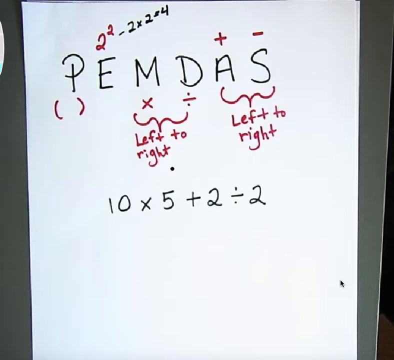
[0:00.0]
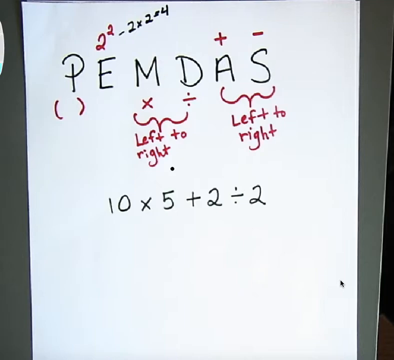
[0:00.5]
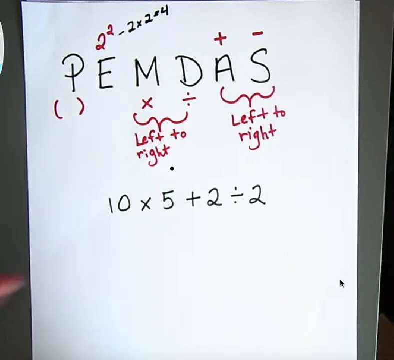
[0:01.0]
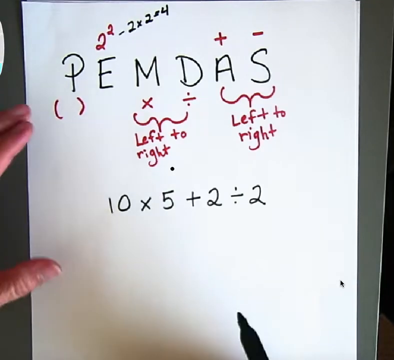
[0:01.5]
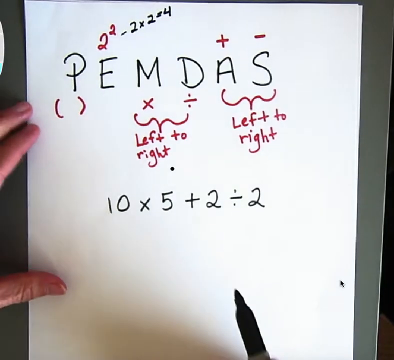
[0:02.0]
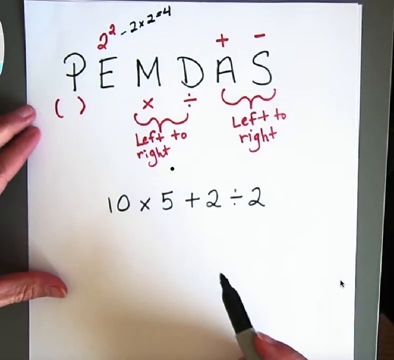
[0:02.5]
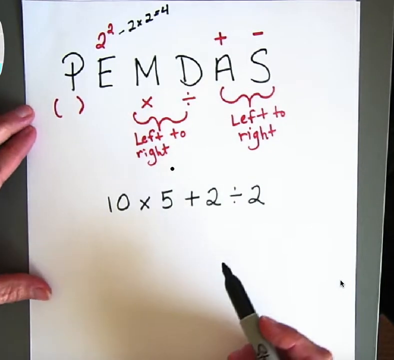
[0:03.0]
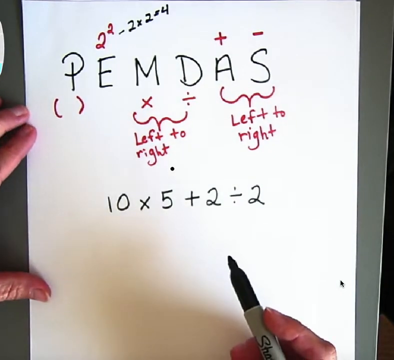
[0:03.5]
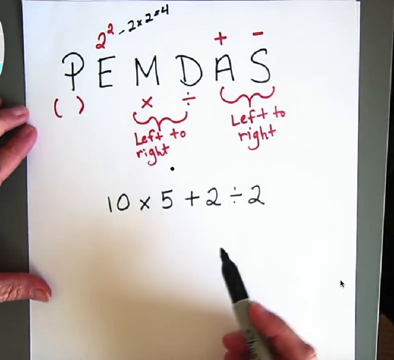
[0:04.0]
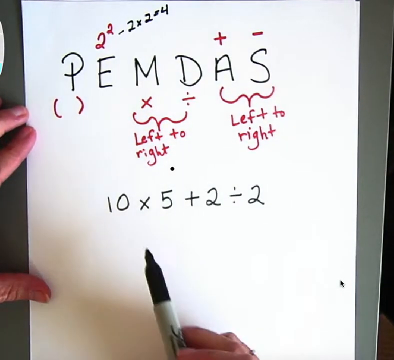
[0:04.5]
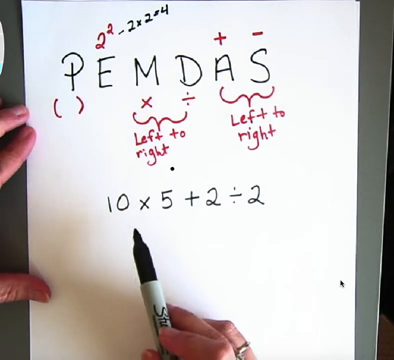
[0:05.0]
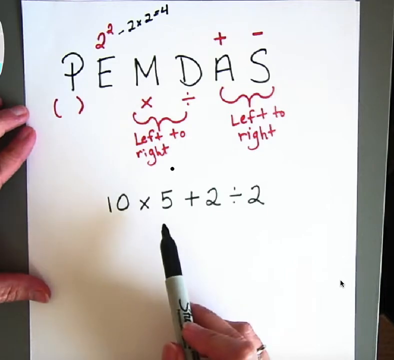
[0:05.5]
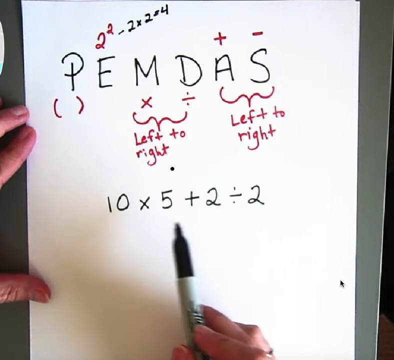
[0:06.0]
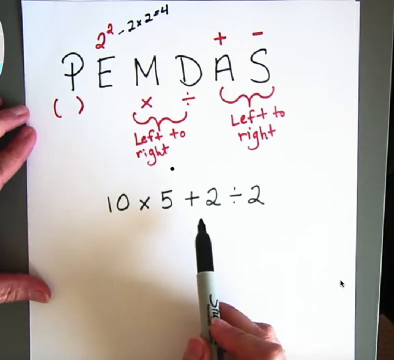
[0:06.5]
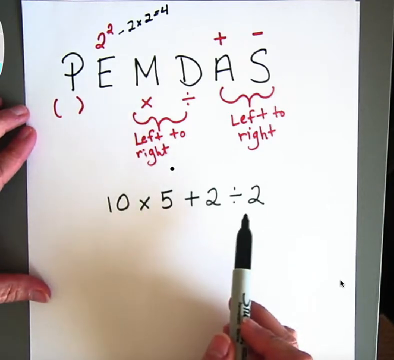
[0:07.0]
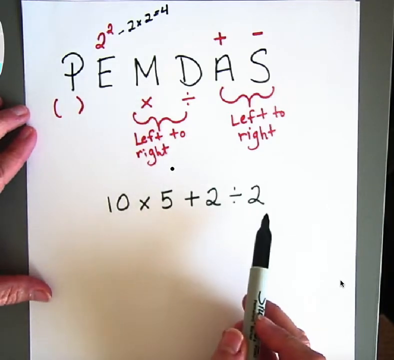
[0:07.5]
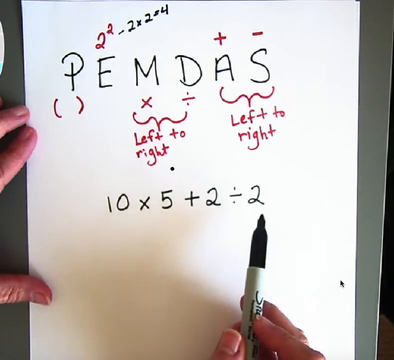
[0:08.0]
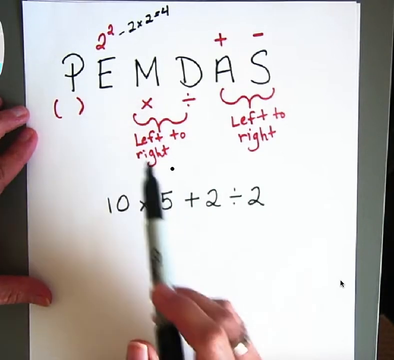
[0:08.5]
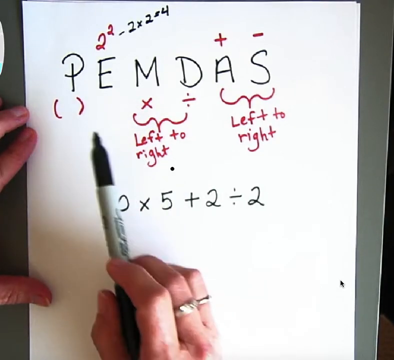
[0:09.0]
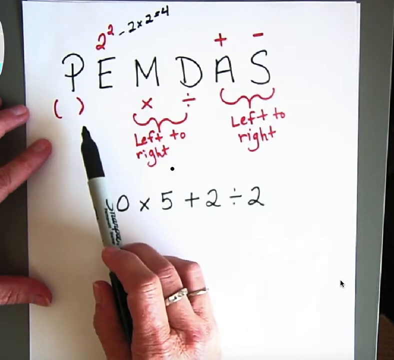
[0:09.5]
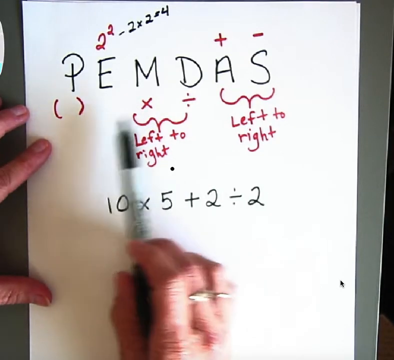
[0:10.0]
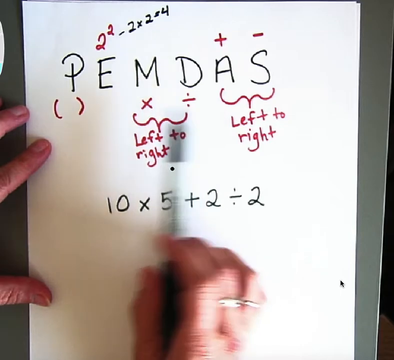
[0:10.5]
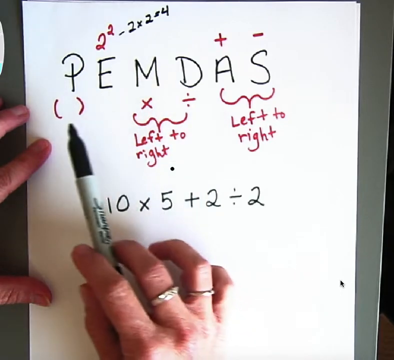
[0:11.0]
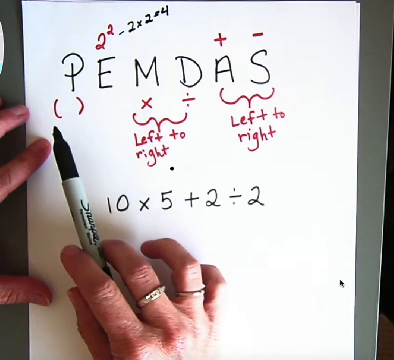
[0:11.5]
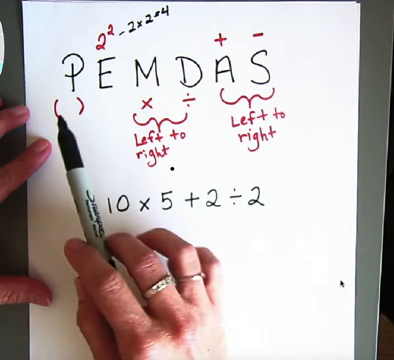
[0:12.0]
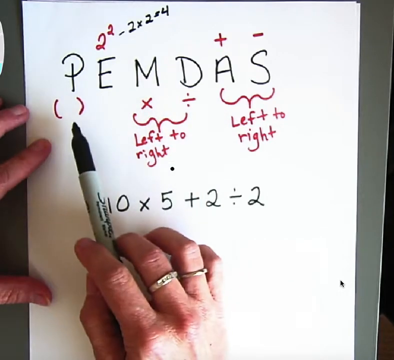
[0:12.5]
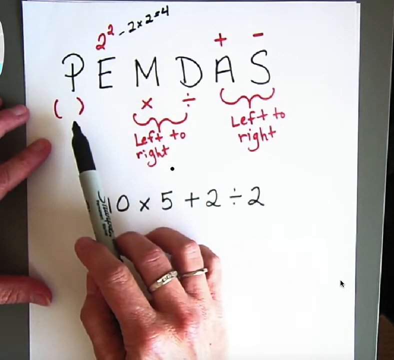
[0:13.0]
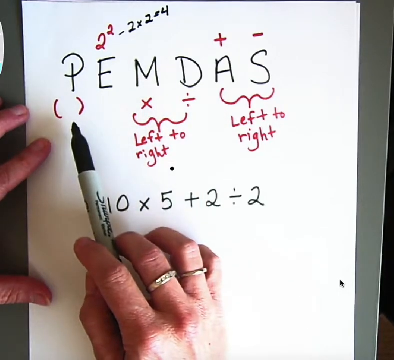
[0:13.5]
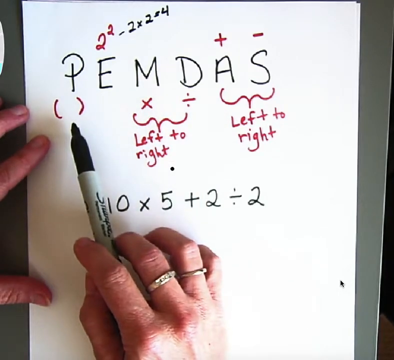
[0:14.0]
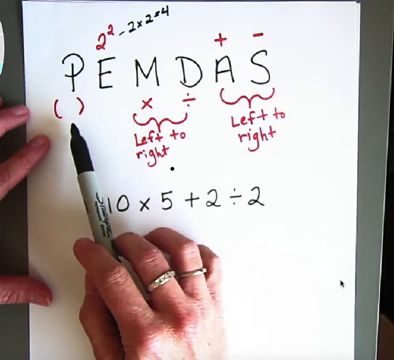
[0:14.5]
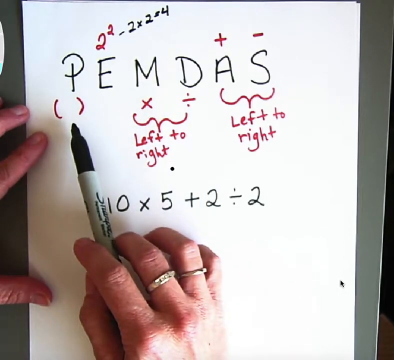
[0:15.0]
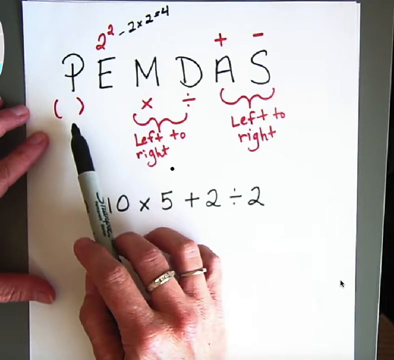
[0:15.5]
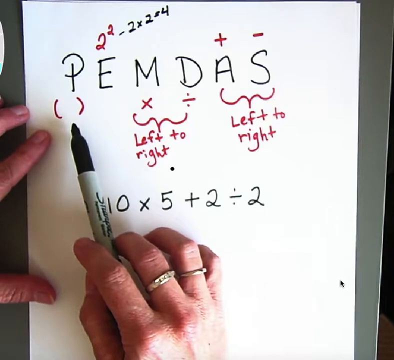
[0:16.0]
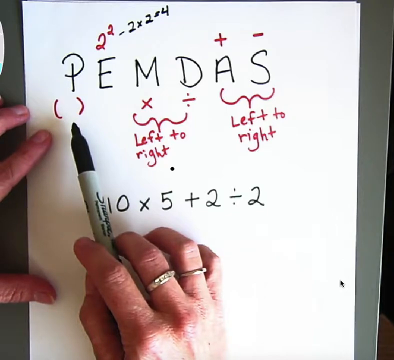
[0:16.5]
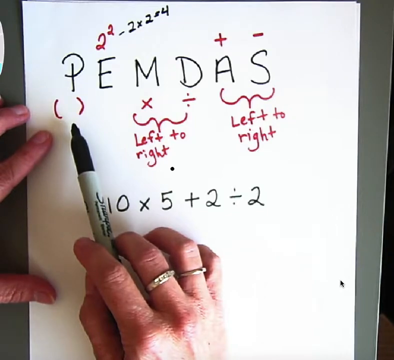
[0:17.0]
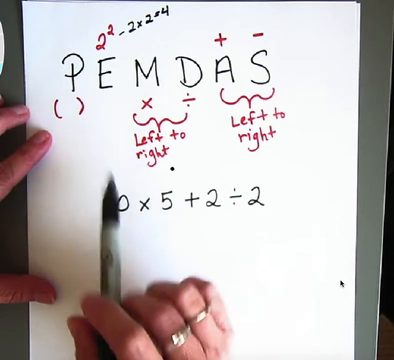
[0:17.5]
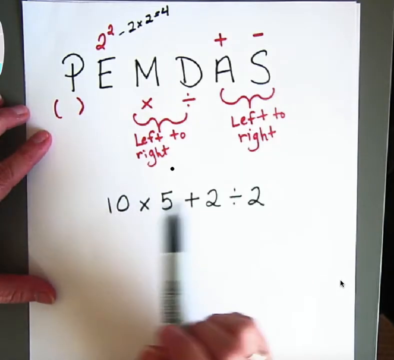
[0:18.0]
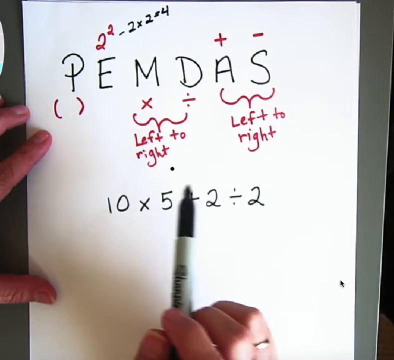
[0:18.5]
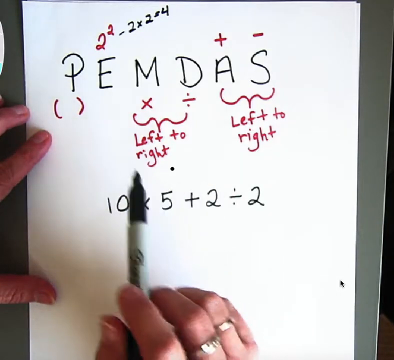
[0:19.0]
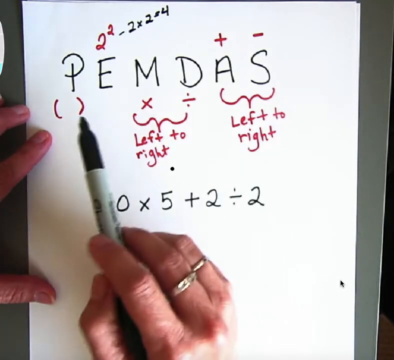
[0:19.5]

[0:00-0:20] A piece of paper, possibly a board, has something like a formula on it. Across it, in capital letters, is "PEMDAS", with the letters separated by at least a space or two. Under the P are two red parentheses. Someone's hand comes up on the left holding a marker pointed toward a formula, 10 times 5 plus 2 divided by 2. The hand rests on the paper, and the person points the marker toward the two red parentheses under the P. Above the E is a big red 2 with a little 2, like 2 to the second power, followed in black by a minus sign, a 2, times 2, equals 4. Over the capital A is a plus sign and over the capital S is a minus sign. Under the M and the D are an X and a division sign, and under them is a wiggly red sign with "left to right" written under it. The same wiggly sign is under the A and S, also with "left to right".